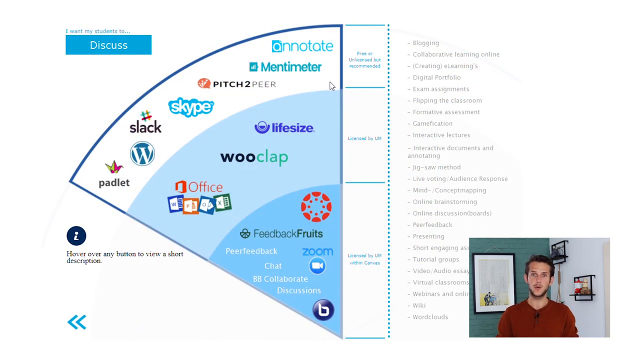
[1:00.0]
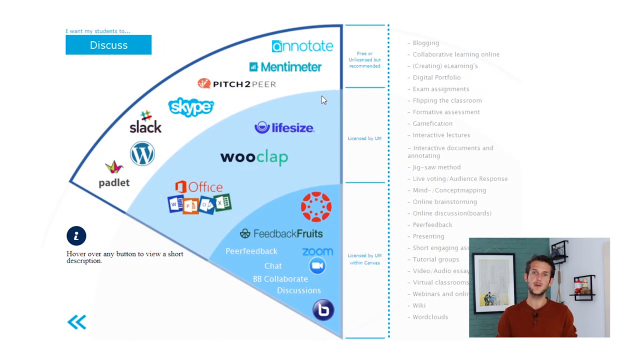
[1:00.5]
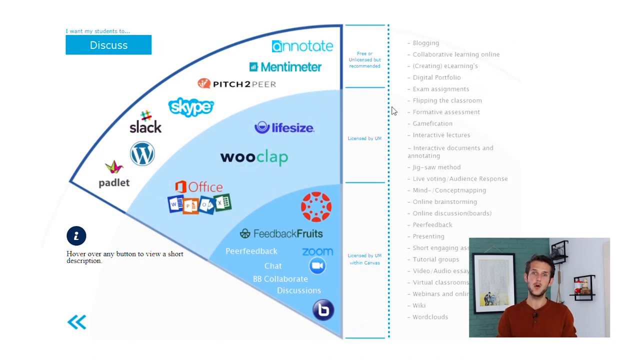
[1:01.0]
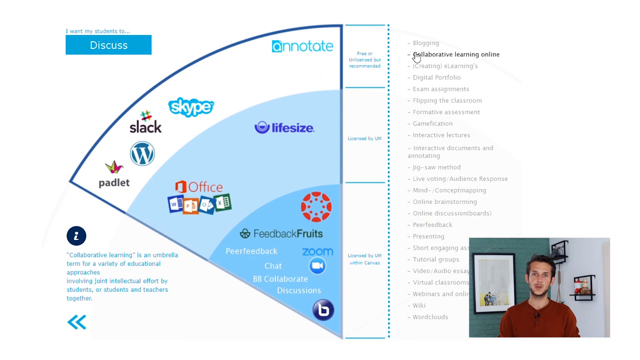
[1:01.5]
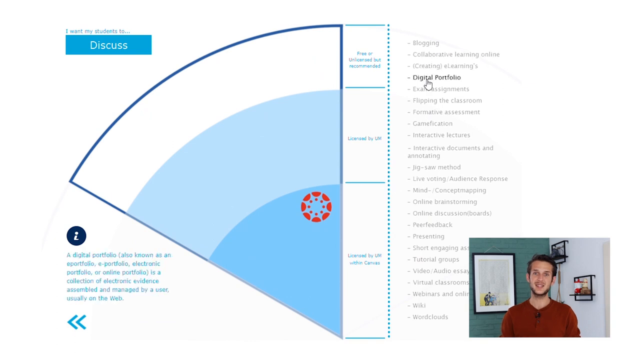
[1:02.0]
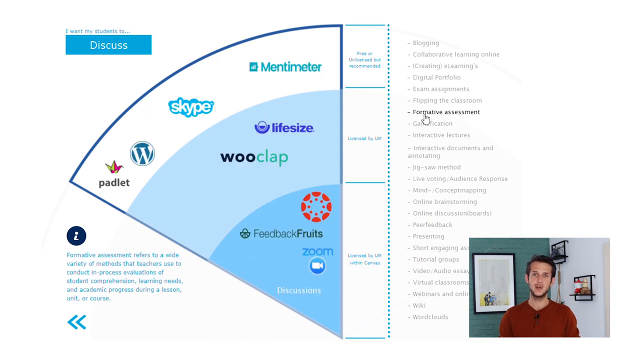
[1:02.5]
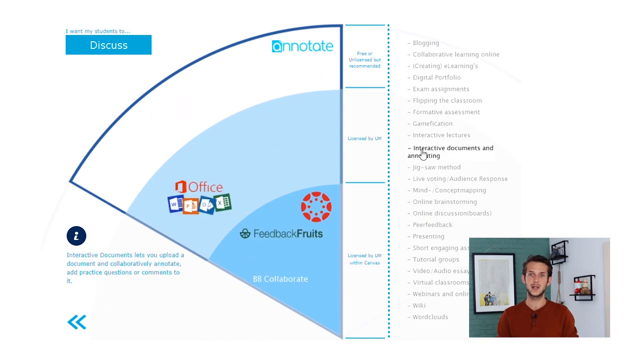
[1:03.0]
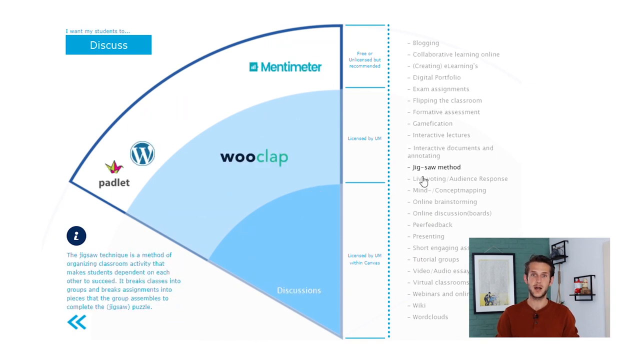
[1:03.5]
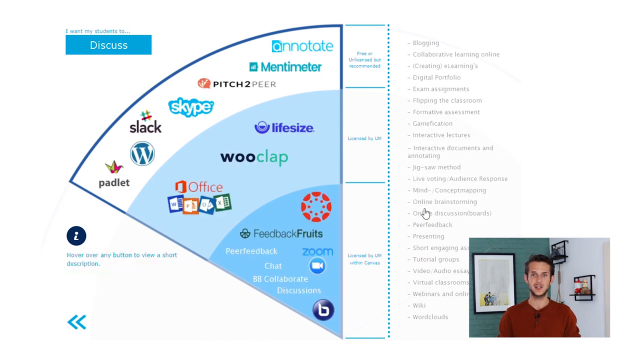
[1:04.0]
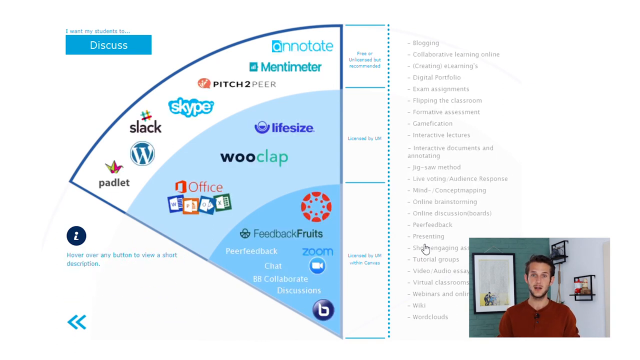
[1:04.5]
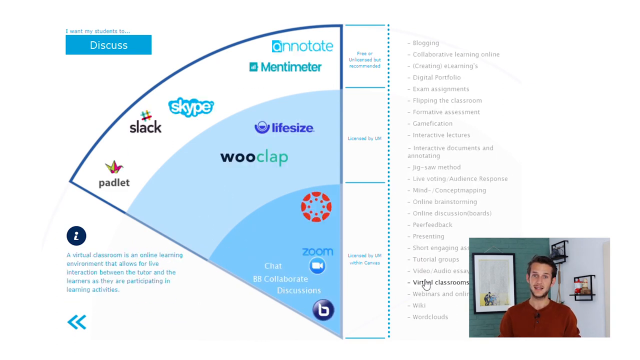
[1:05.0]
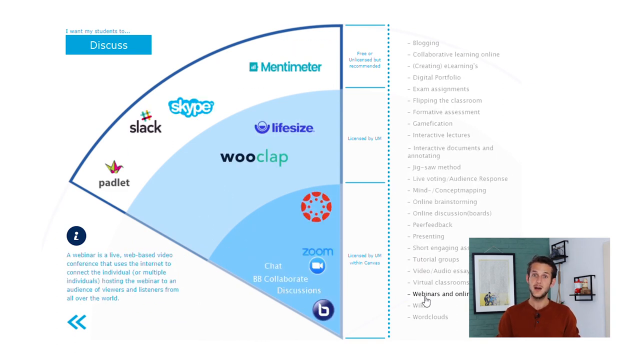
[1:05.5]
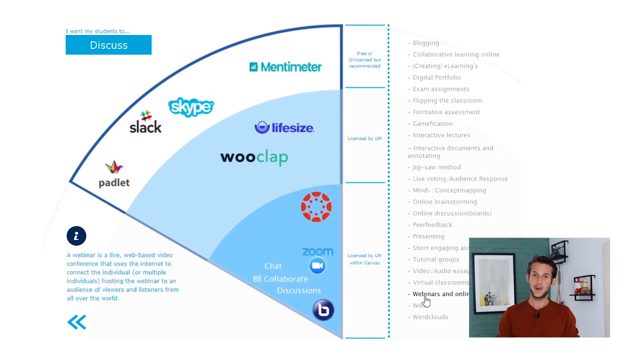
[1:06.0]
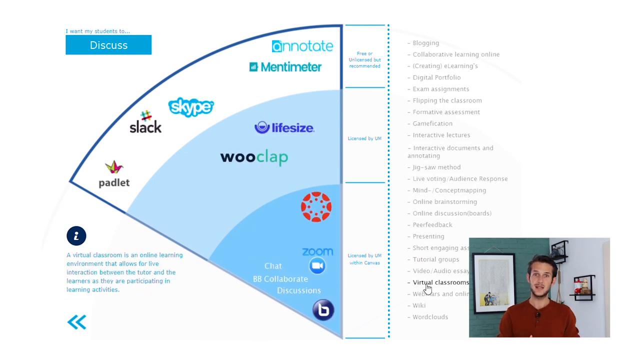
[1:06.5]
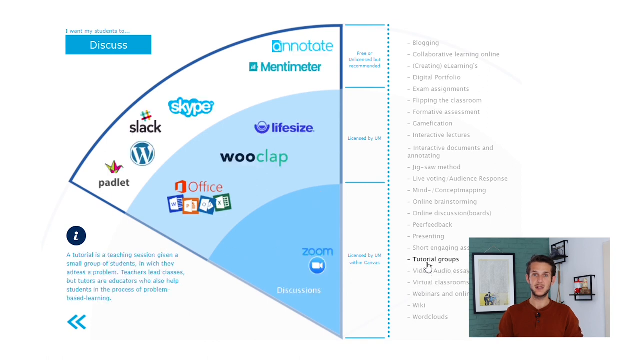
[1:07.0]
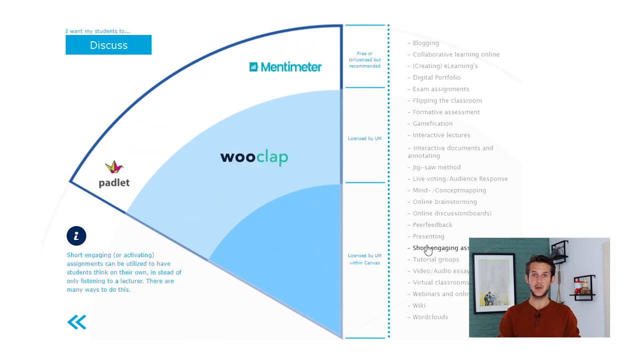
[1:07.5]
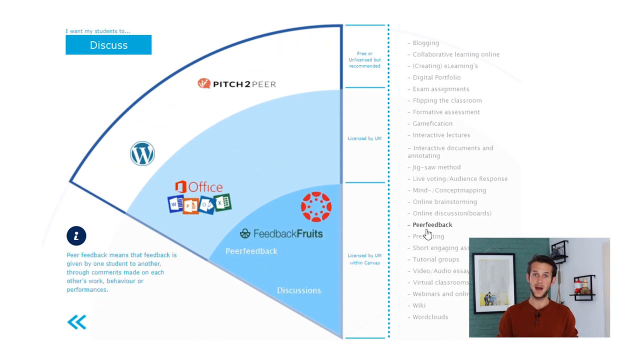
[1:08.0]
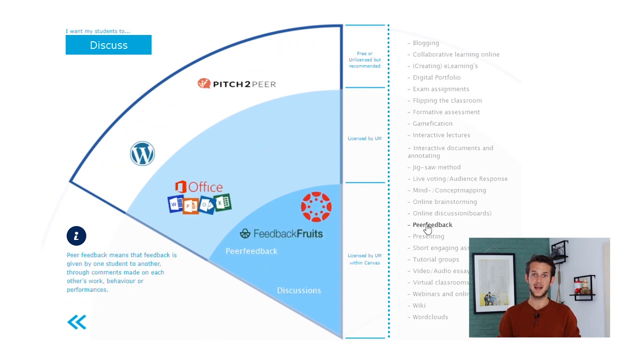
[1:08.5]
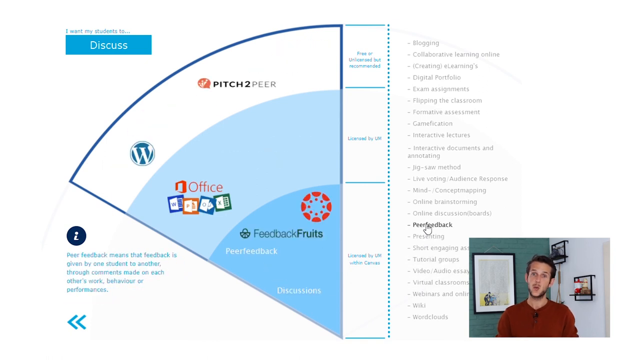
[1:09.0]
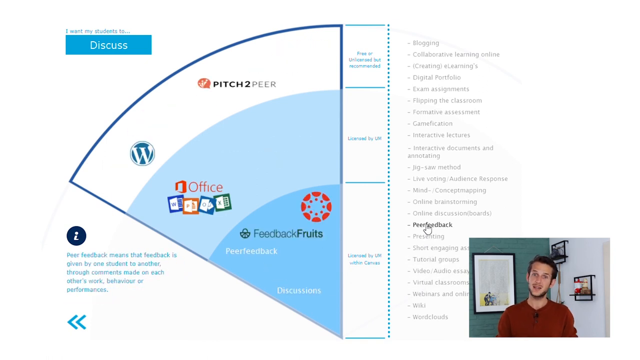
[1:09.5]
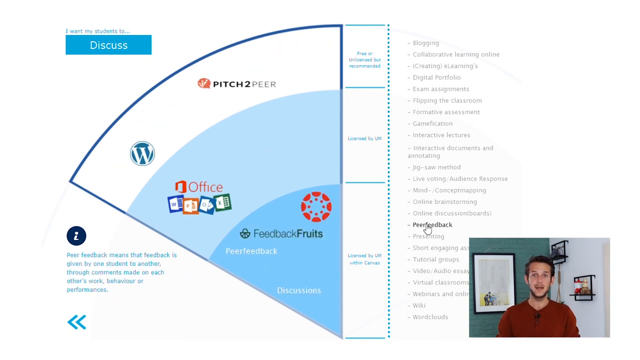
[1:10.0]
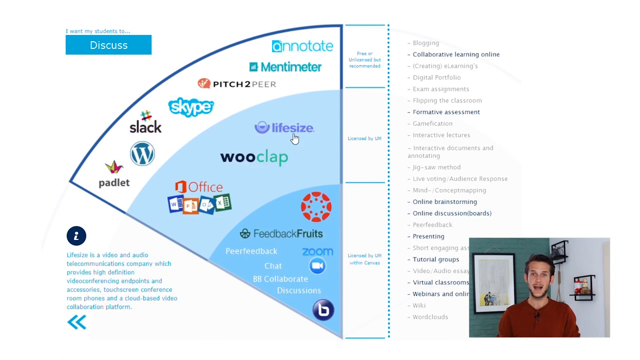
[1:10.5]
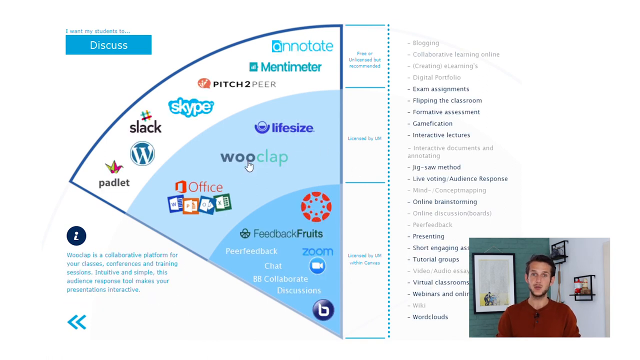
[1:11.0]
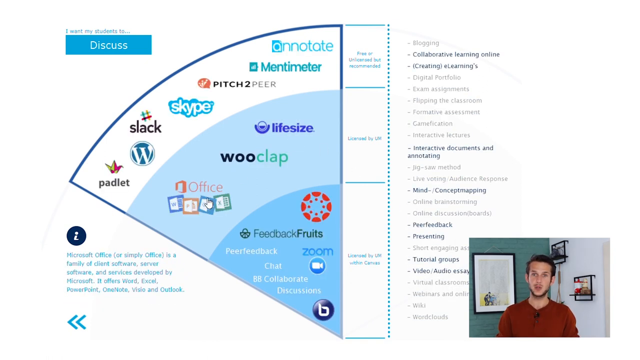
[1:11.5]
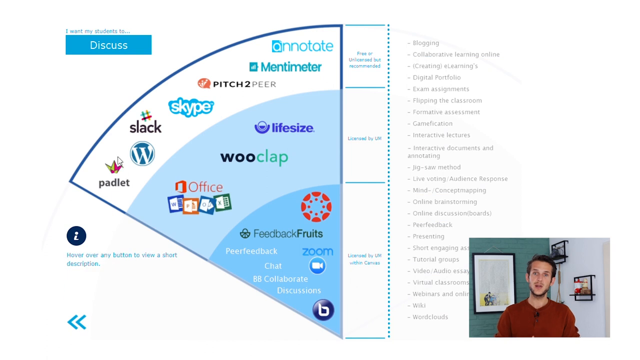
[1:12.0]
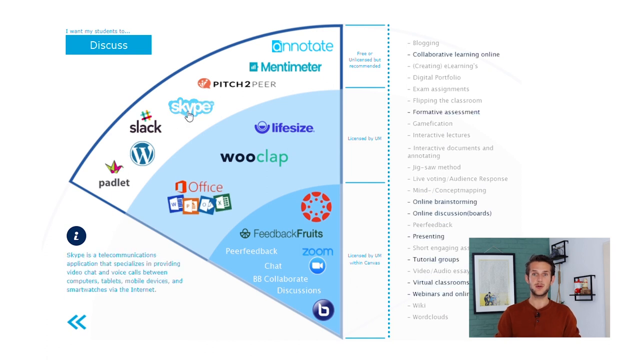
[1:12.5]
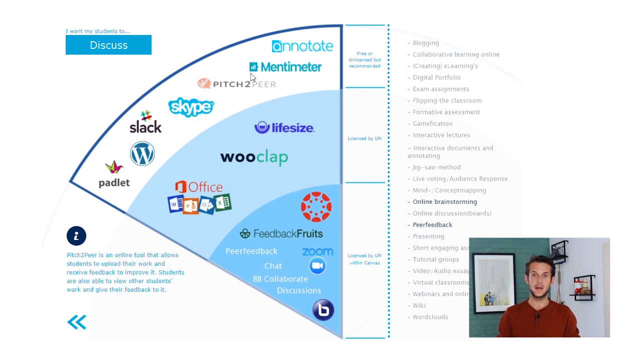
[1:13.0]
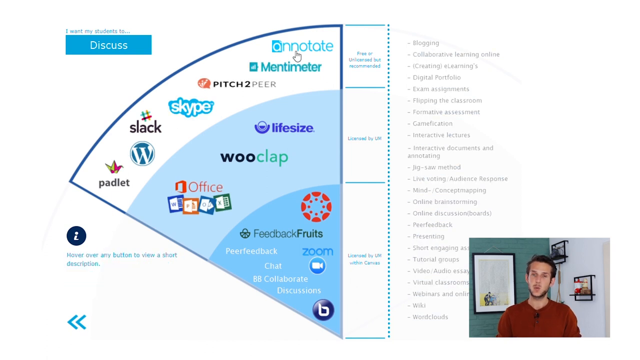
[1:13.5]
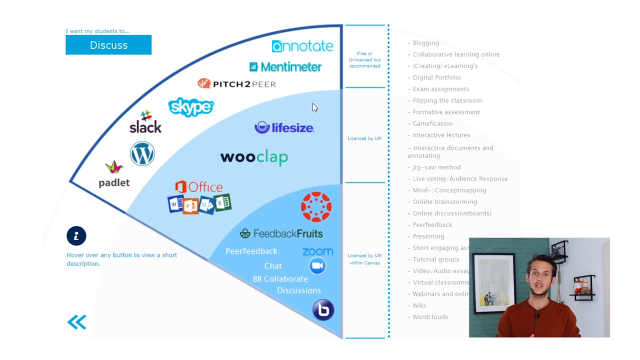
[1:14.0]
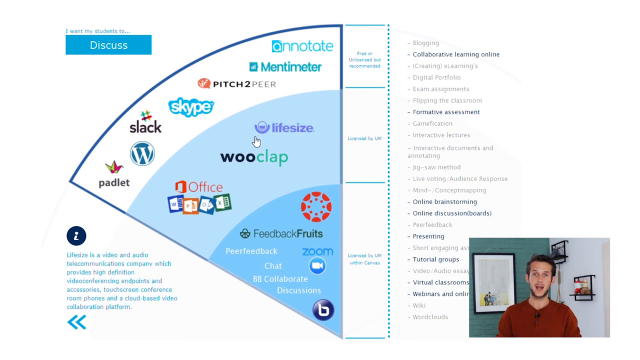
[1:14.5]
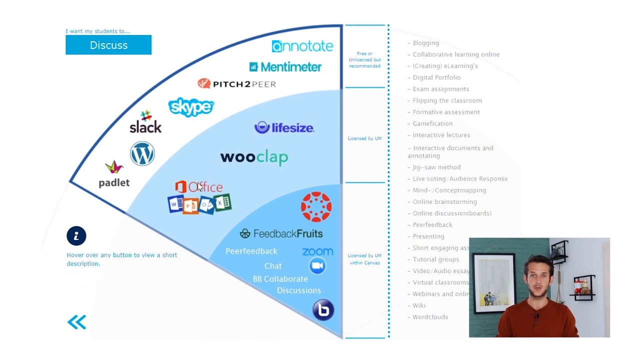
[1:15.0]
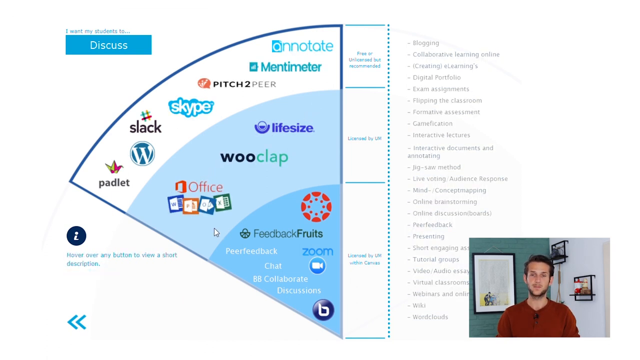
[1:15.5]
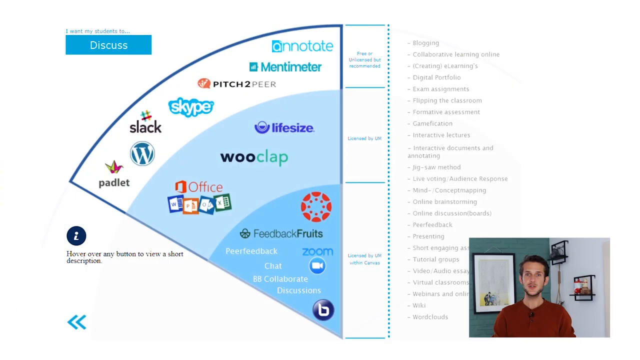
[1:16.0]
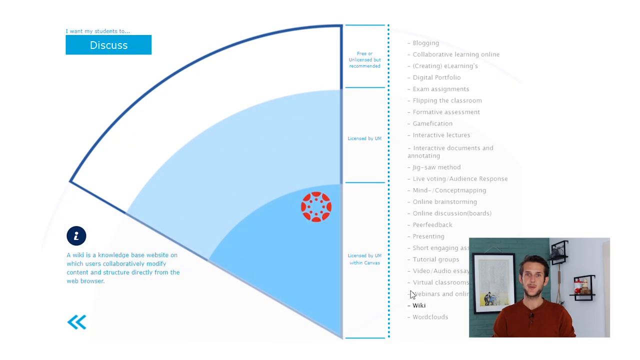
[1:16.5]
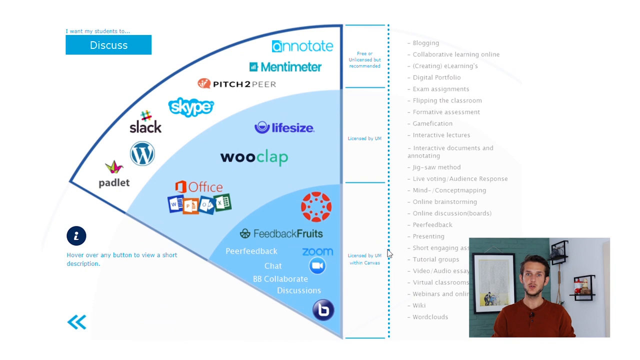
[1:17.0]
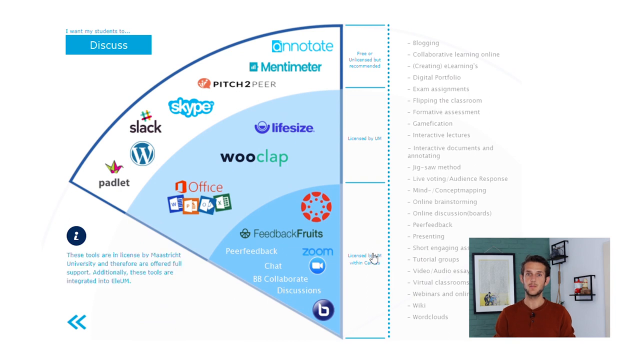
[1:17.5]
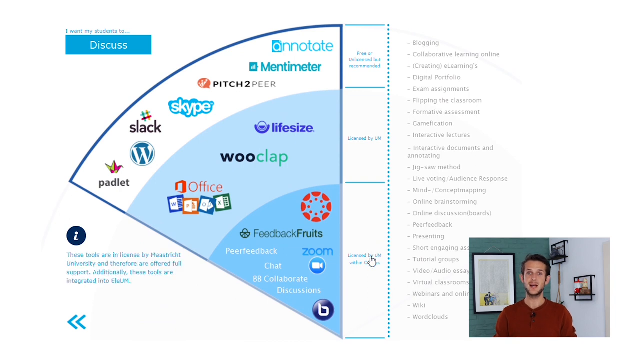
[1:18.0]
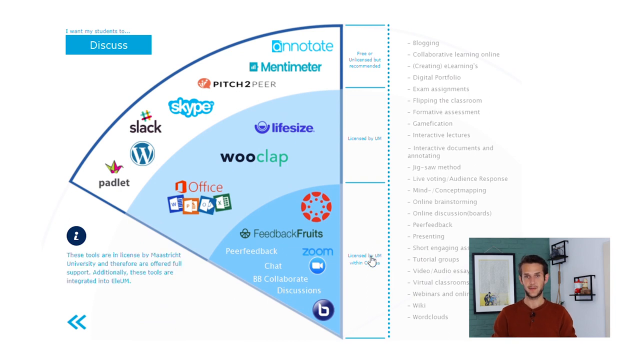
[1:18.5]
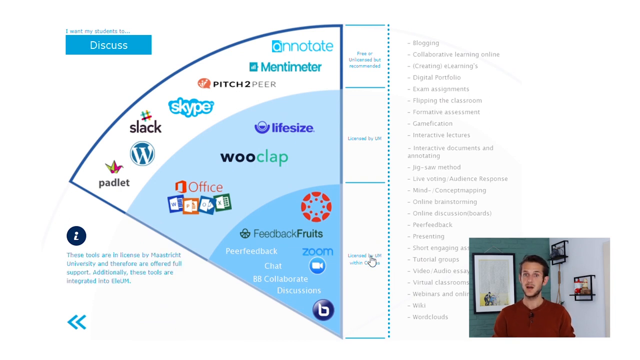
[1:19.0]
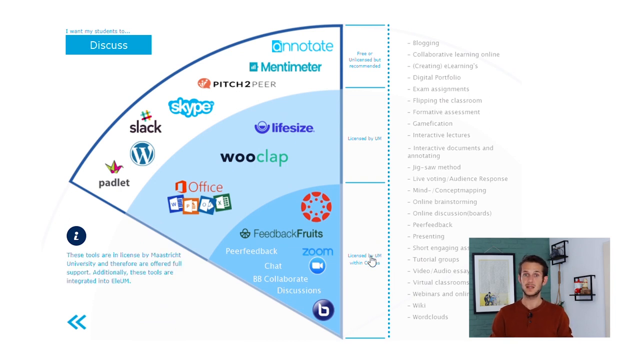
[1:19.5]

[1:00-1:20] On the discuss page, the slice of the circle where discuss was is replaced with two or three tiers of applications, following the same categories of licensing, recommendation, and availability within Canvas. The outer tier is recommended but unlicensed or free, the second tier is licensed, and the middle tier is licensed within Canvas. On the right is a bulleted list of what the tools can be used for. The cursor hovers over each item in the whole list, and the applications in the slice dynamically show which apps would be suitable, while the information area updates with a short description. Hovering over a piece of software instead makes the long bulleted list highlight what it would be useful for, along with a short description. After a transition to the same screen, the cursor hovers over the three tier categories, starting with licensed within Canvas.